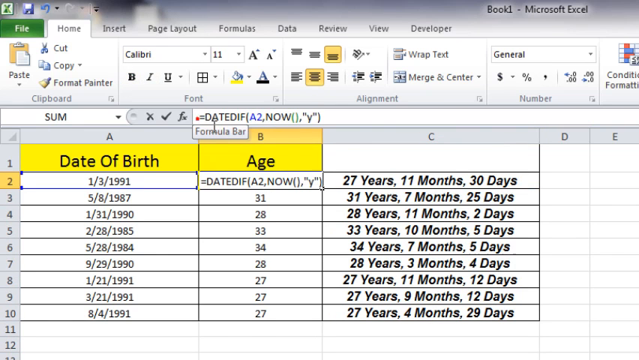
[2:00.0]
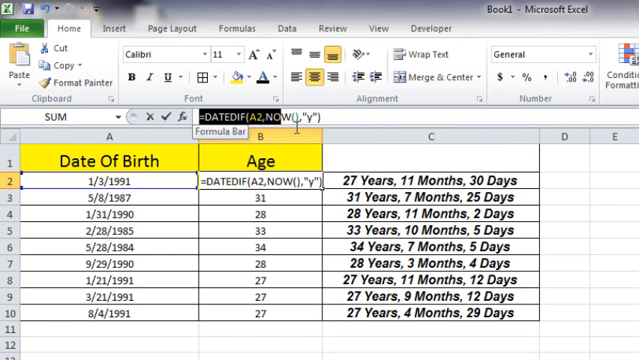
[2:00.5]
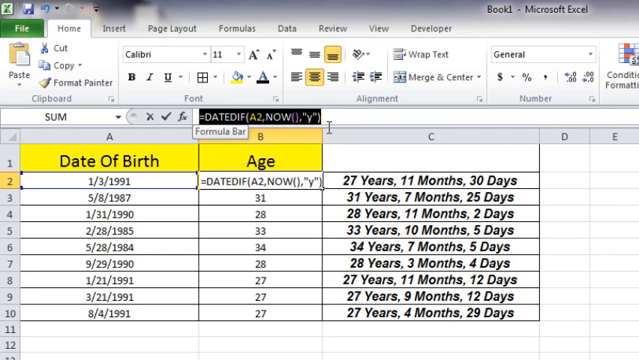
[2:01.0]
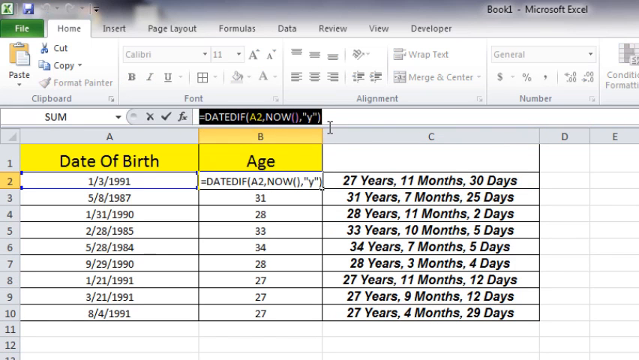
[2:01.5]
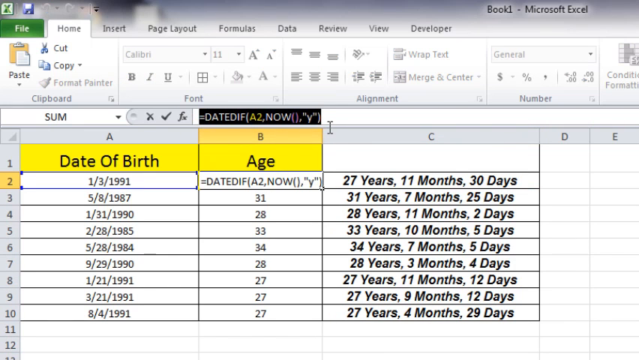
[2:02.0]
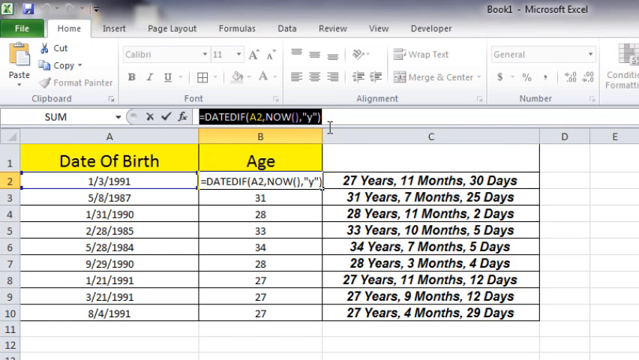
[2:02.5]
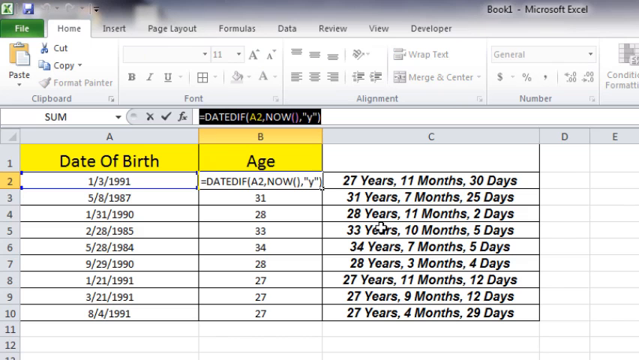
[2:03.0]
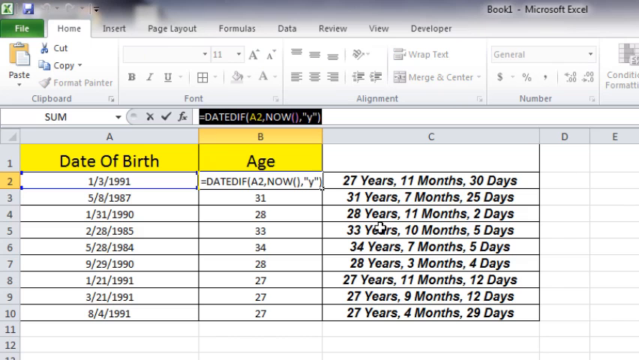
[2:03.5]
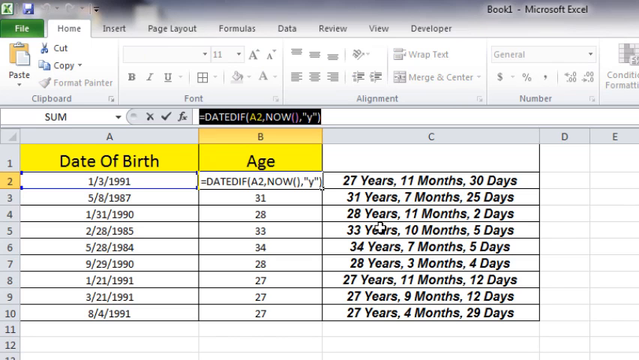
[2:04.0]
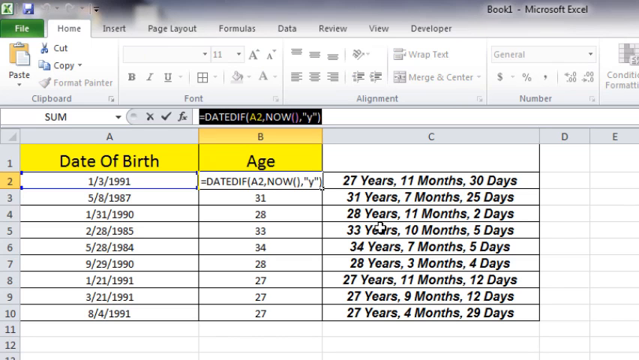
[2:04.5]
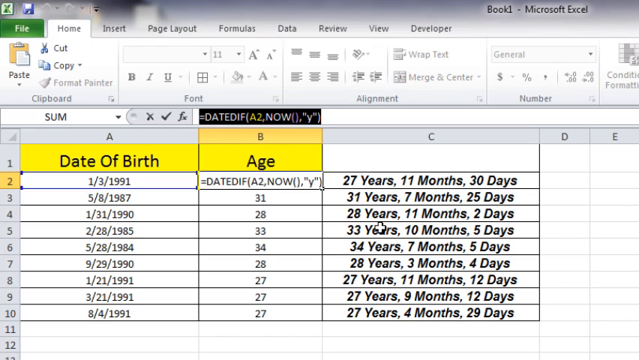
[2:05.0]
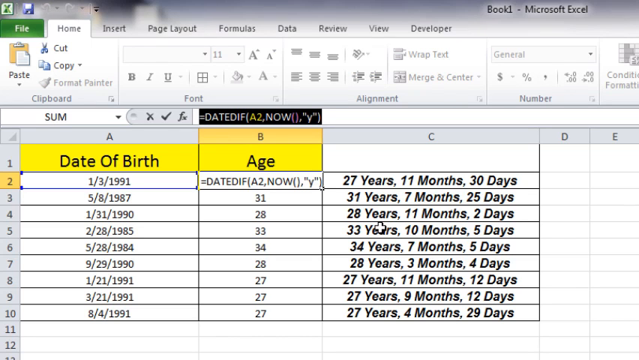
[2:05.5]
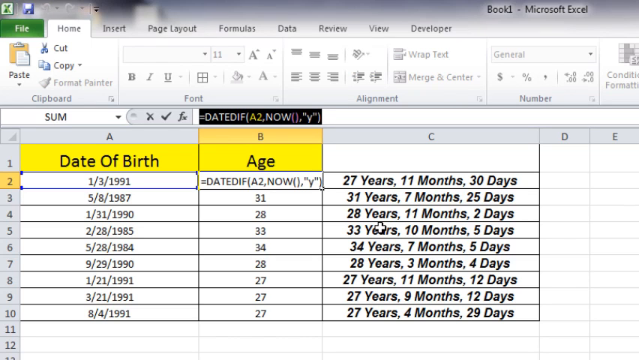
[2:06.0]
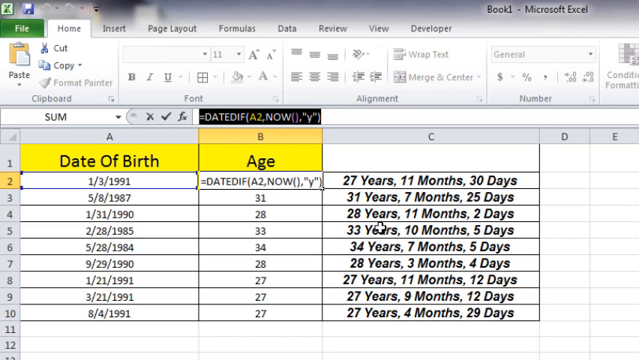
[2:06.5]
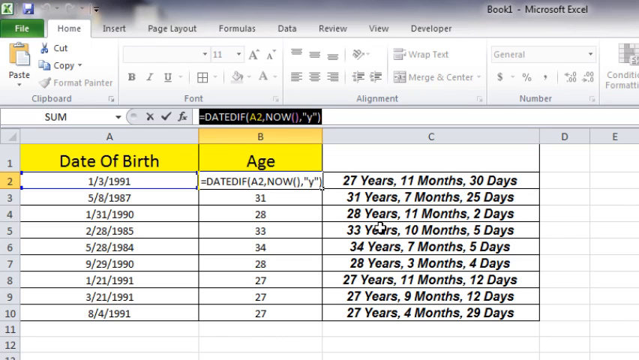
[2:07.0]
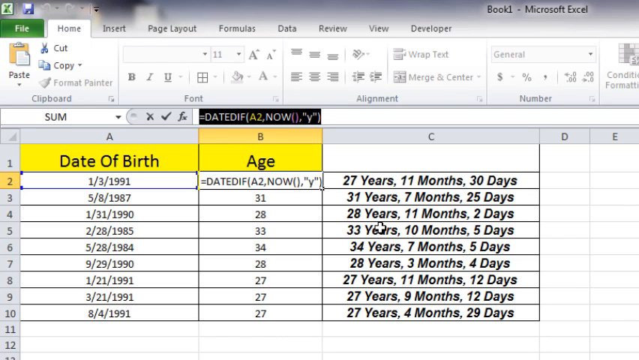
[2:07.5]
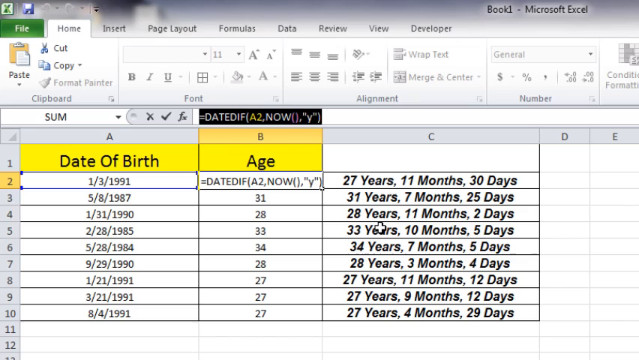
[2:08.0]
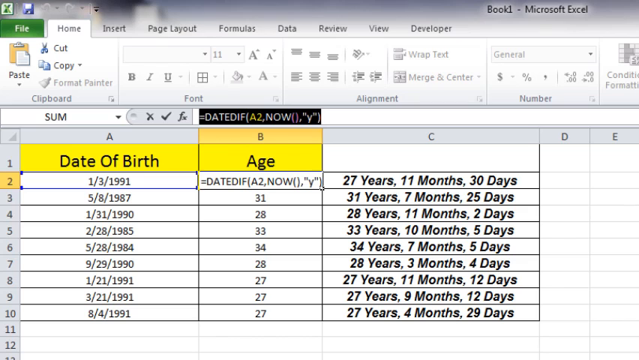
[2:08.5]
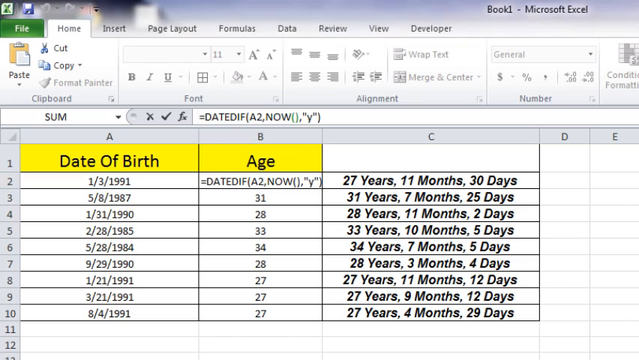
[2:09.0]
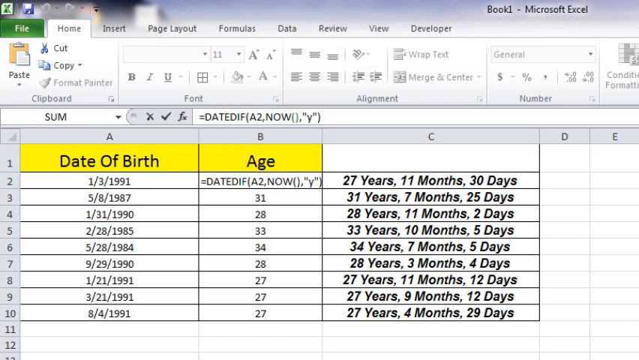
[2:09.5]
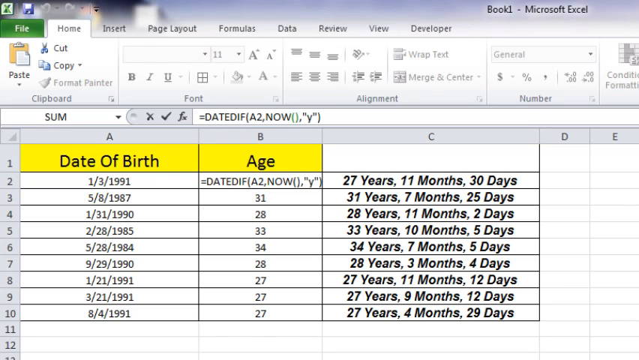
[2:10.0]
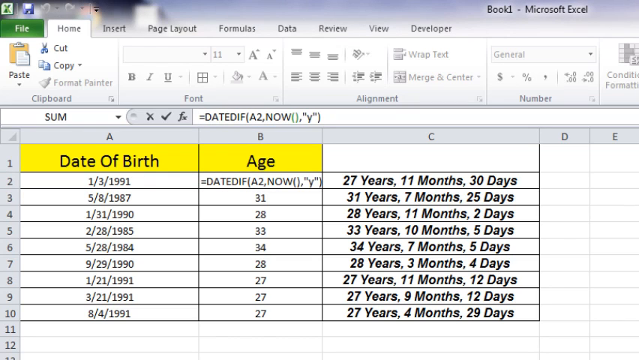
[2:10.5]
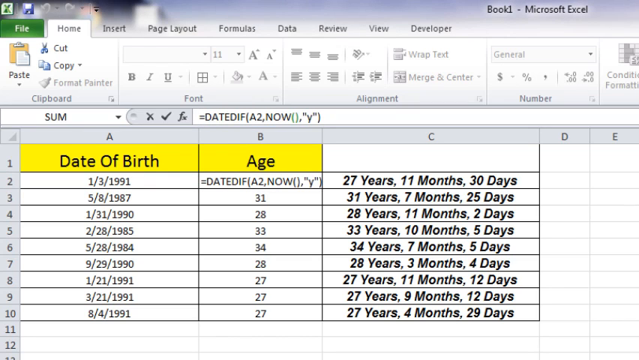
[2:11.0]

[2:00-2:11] The cursor clicks back into C2. Sometimes when the person clicks, a little red dot appears to mark where the click is. The person clicks into the formula bar and selects the entire formula, and nothing else changes on screen. The video ends on the original simple DATEDIF formula.